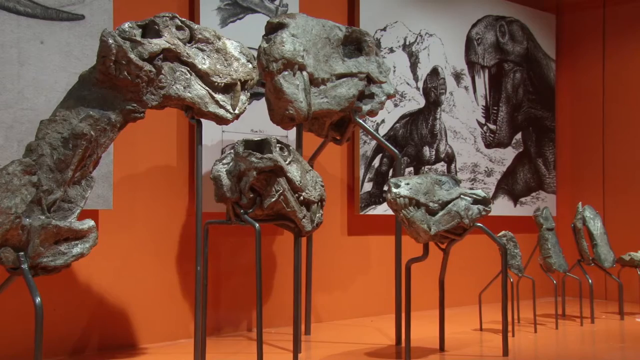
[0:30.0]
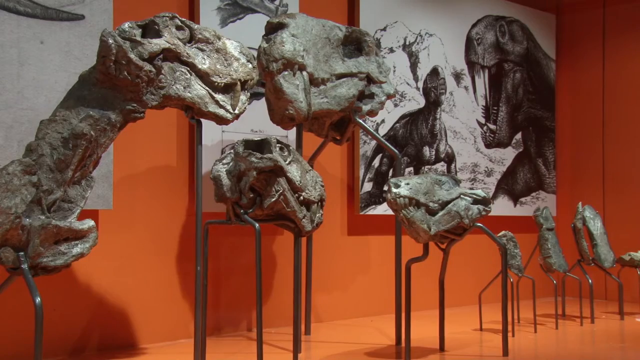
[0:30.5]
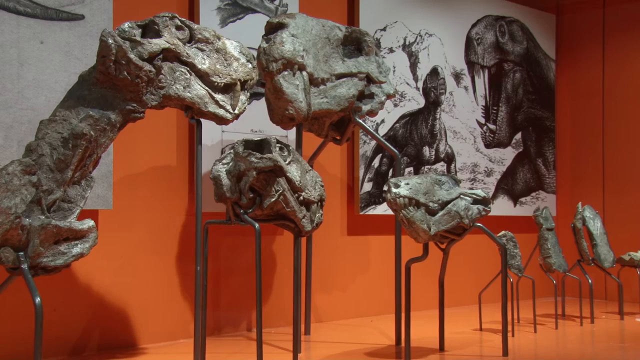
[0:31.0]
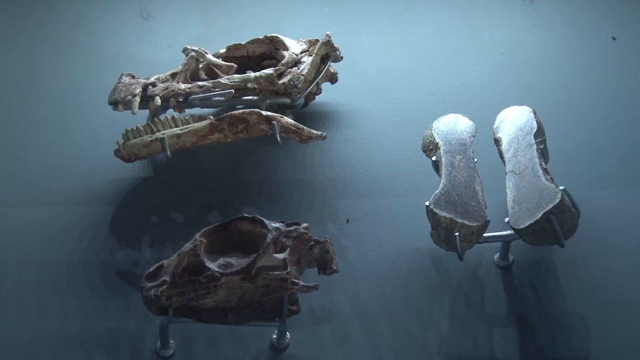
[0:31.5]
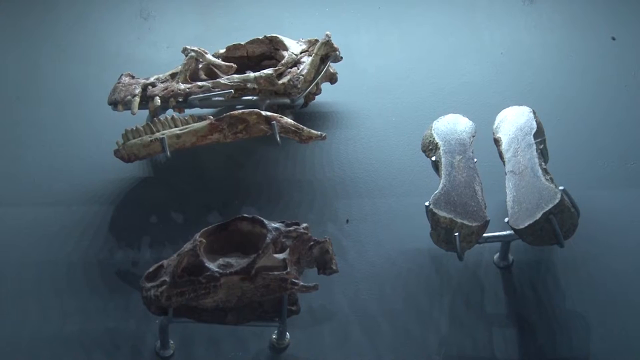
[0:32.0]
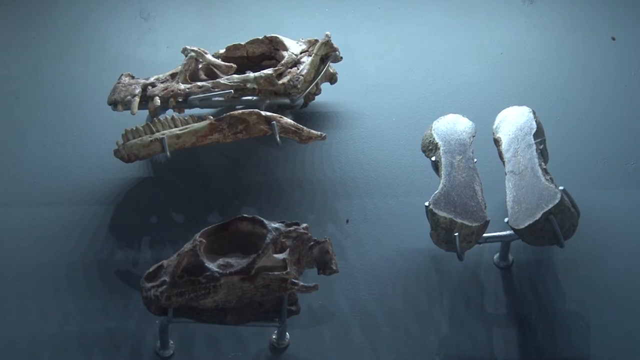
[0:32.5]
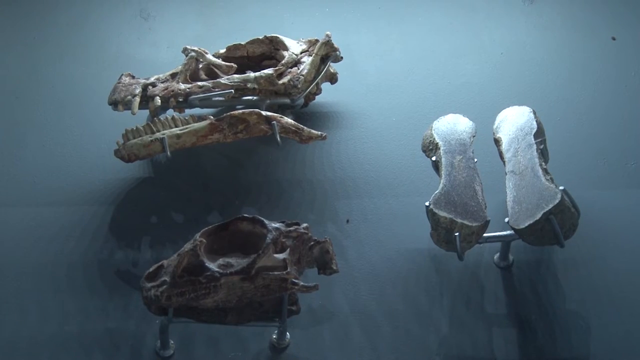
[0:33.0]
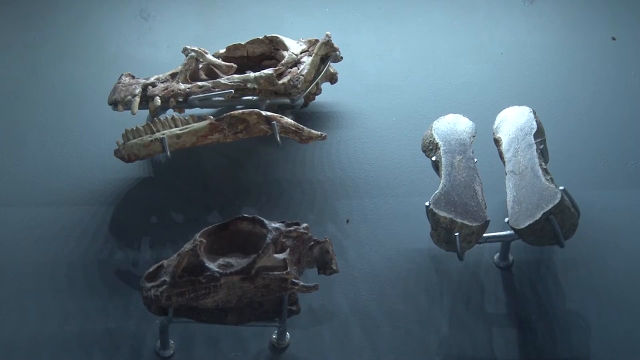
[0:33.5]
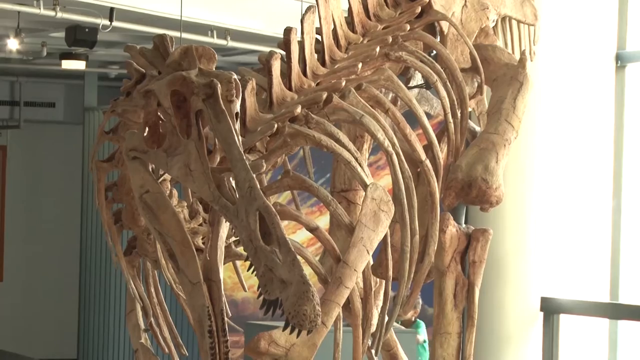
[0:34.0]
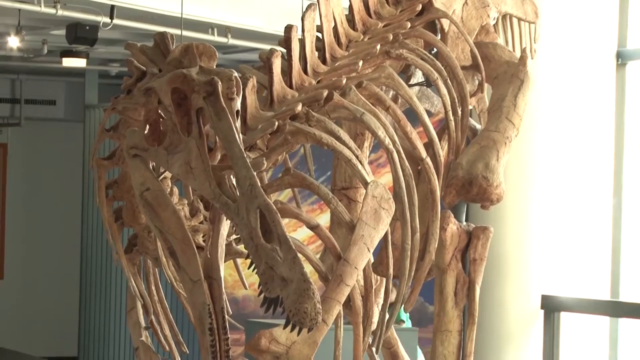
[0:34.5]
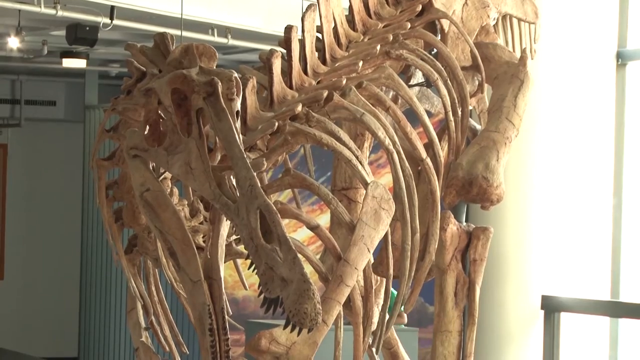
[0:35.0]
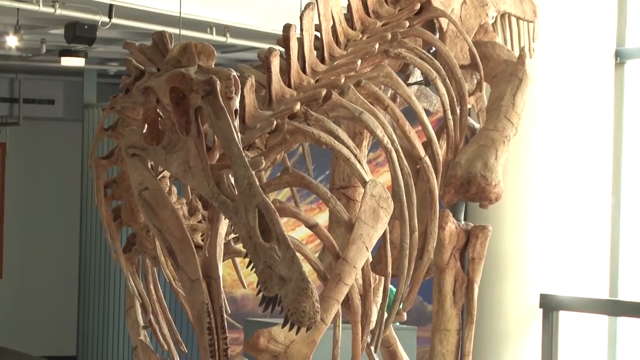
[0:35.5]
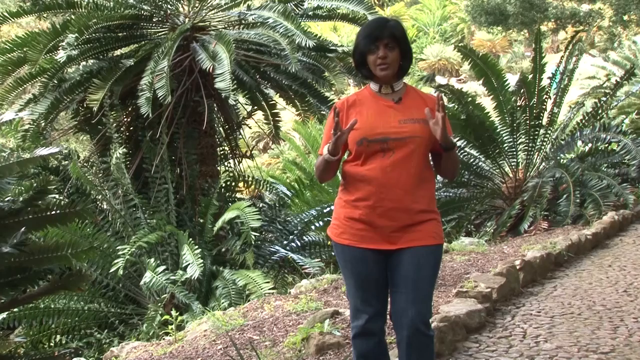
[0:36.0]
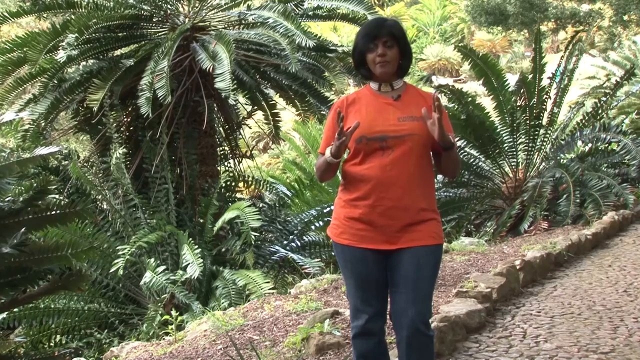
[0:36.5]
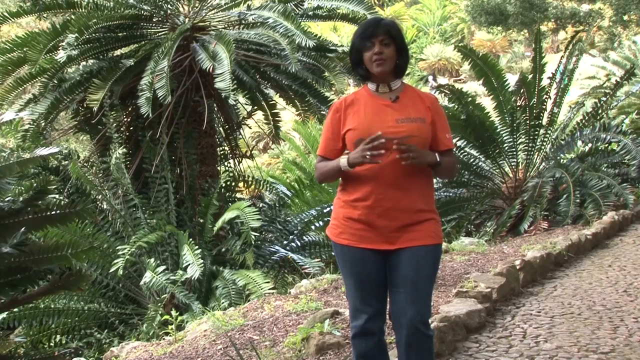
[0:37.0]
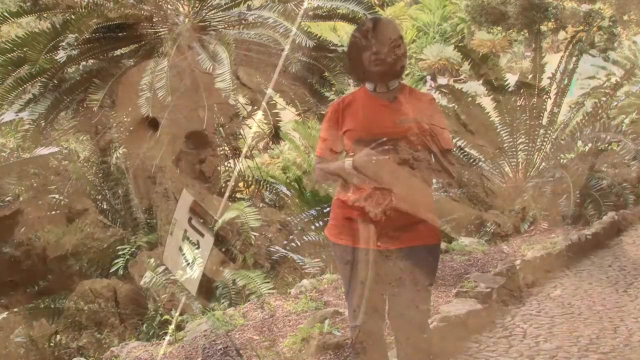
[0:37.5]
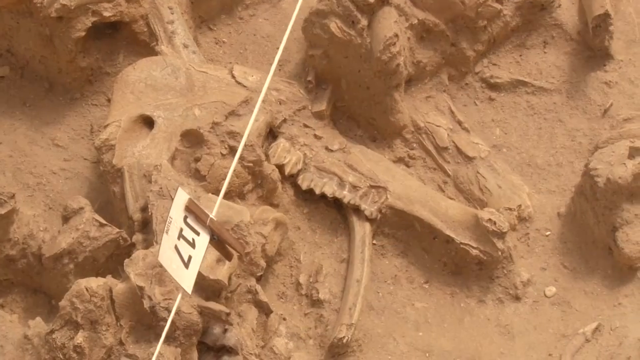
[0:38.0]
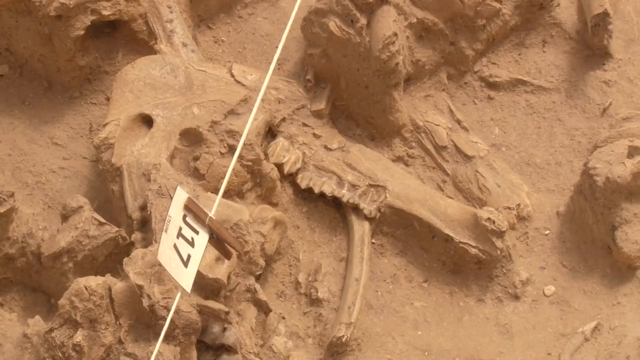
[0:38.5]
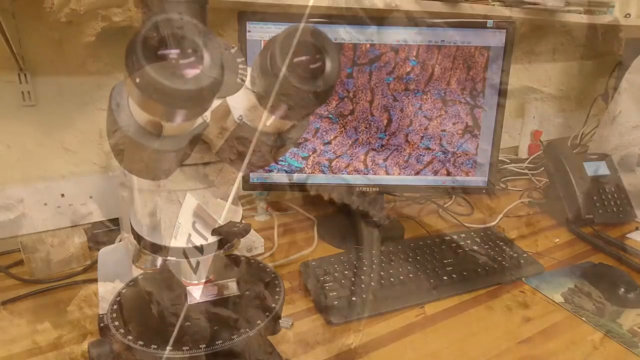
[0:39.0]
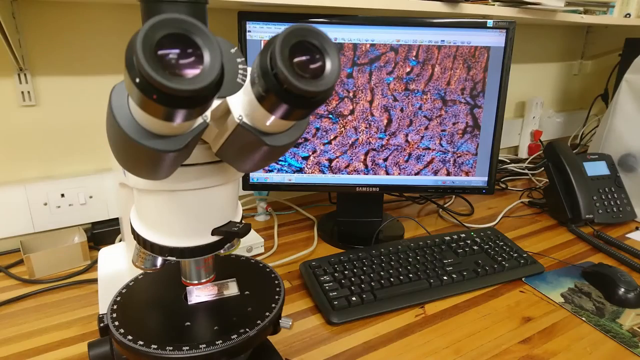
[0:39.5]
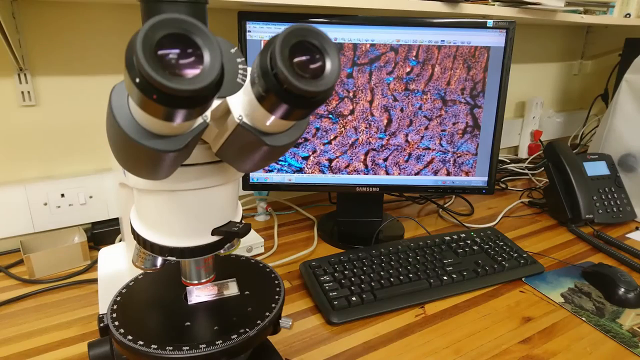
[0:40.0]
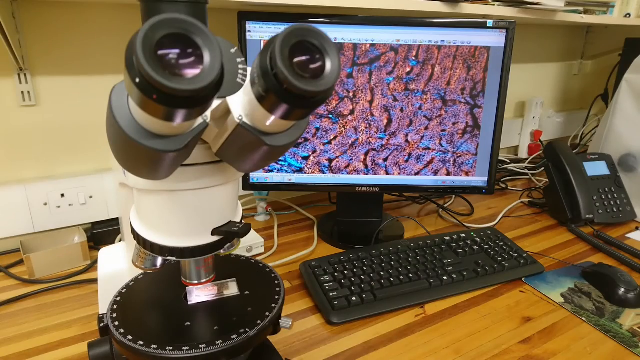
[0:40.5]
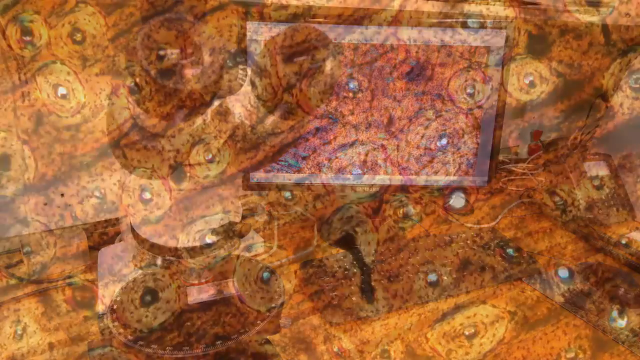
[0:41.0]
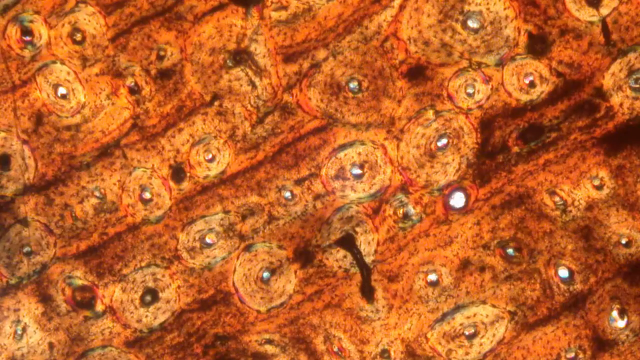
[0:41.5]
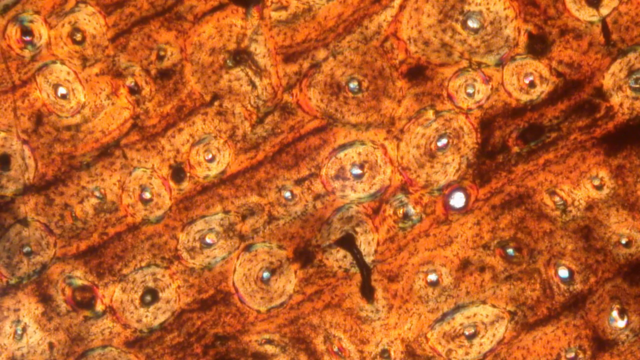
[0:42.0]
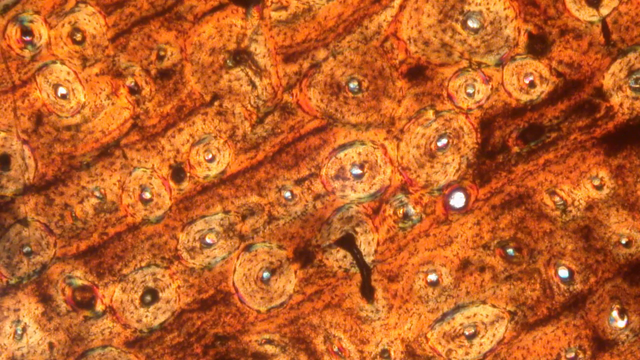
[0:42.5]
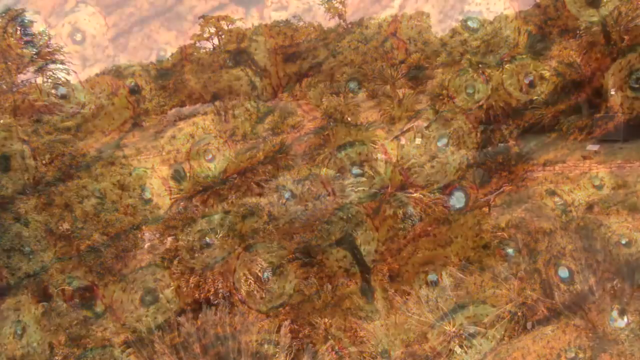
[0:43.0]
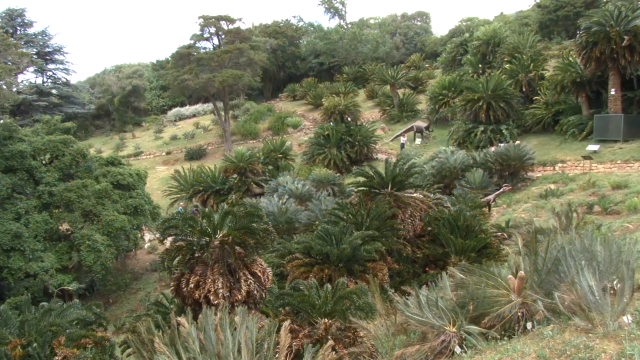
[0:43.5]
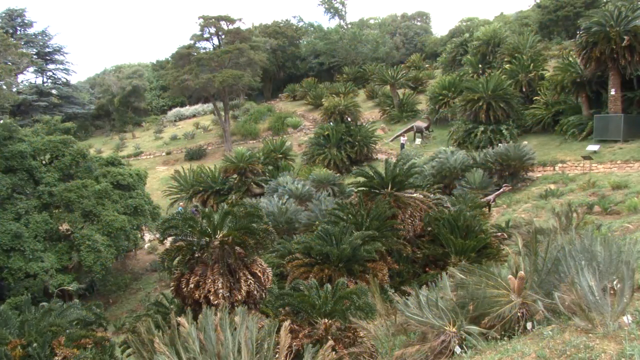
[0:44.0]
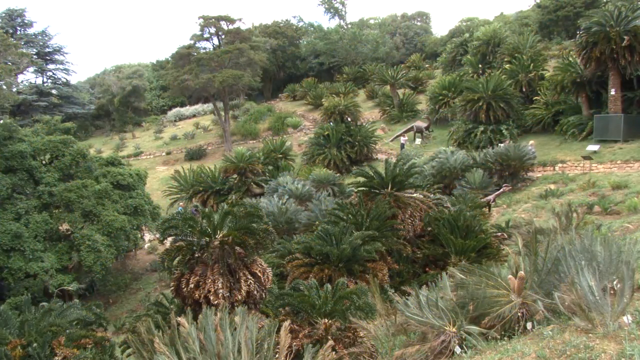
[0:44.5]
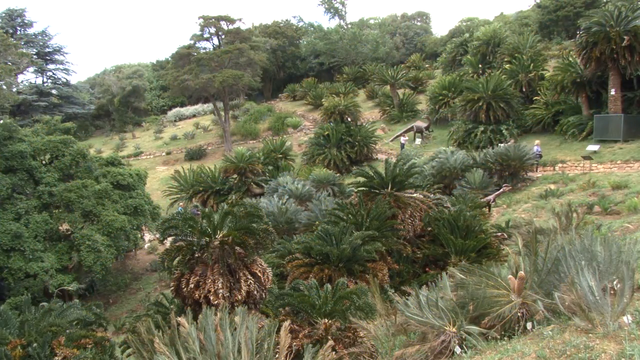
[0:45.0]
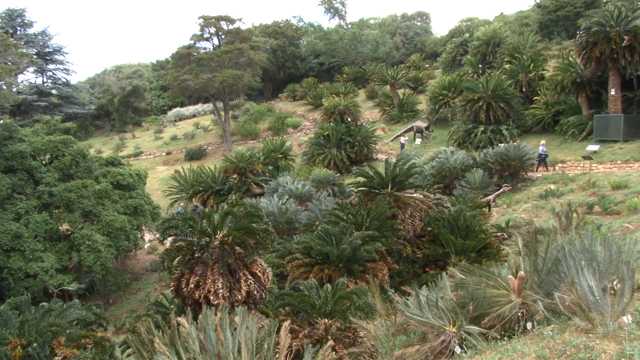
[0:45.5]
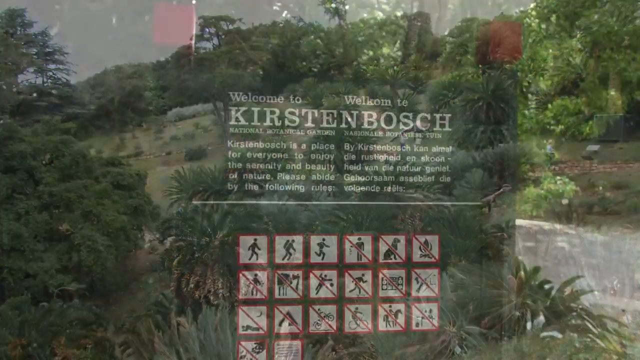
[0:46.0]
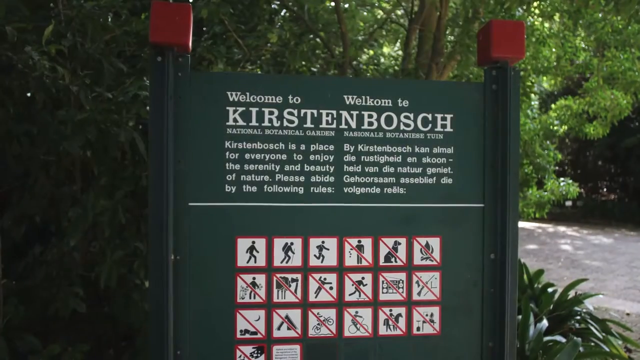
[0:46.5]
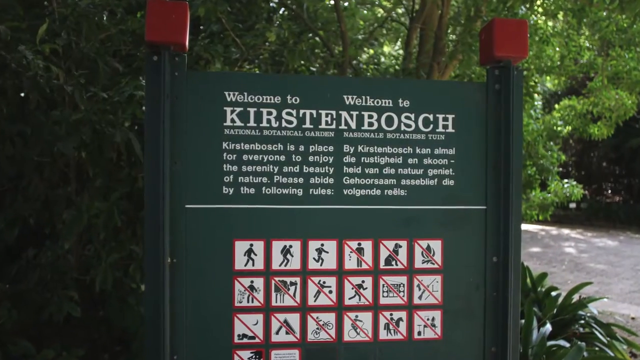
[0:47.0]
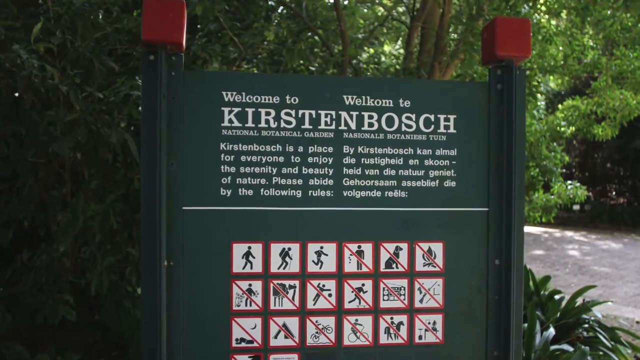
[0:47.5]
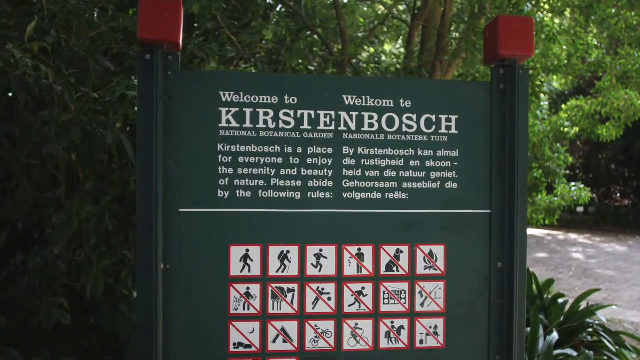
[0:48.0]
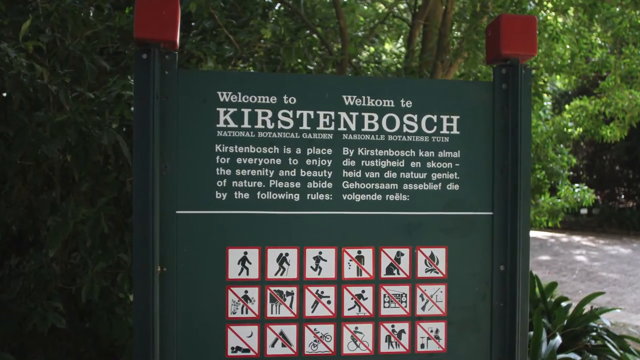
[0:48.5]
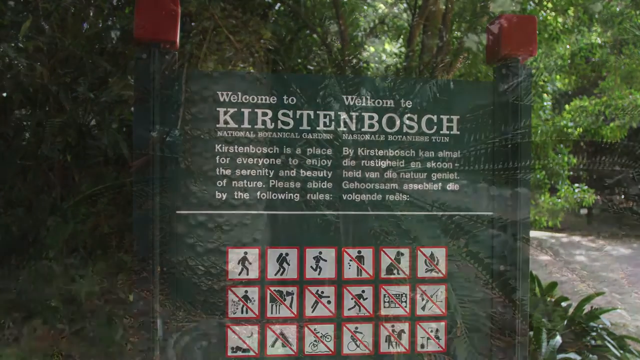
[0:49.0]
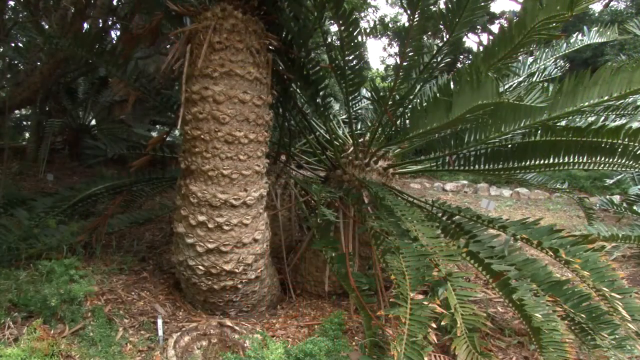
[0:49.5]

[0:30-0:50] Bone-like fossils are shown, and another set pops up immediately after, mounted on a wall or a sort of display. They include jaw bones, and then another large, sort of skeletal set of bones is presented. The doctor appears again in her orange shirt, speaking, her hands seemingly indicating the width of something. What appears to be perhaps an archaeological dig exposes bones encased or enmeshed in soil, with a piece of string marking the find and the label "J17." Next comes a sort of microscope setup, with a screen to the right, on the other side of the microscope, showing an almost maze-like set of raised bumps in blue, pink, black and various other colors. A close-up follows of what appears to be a cell structure displayed by a microscope. Then an outdoor jungle-like hillside with palm trees is shown.